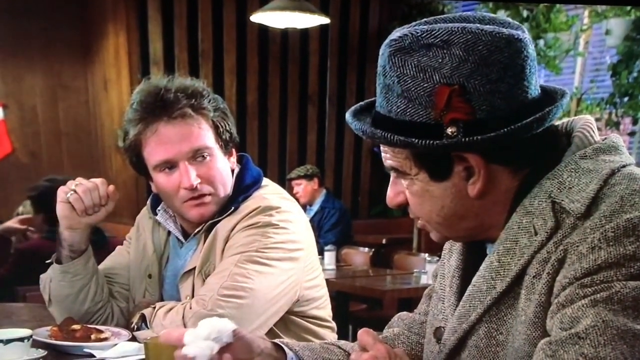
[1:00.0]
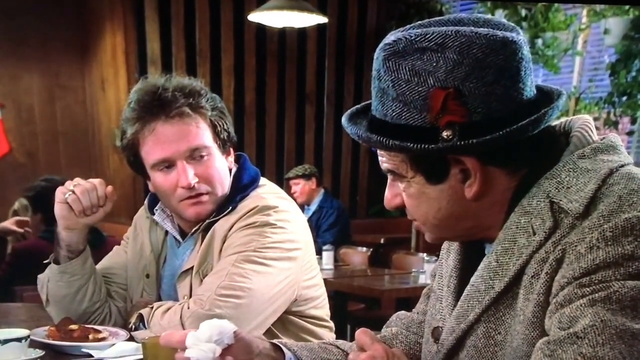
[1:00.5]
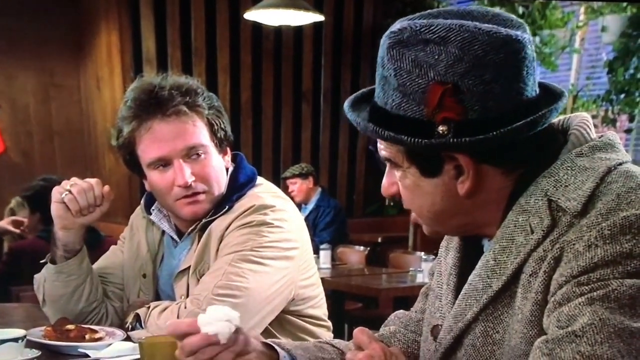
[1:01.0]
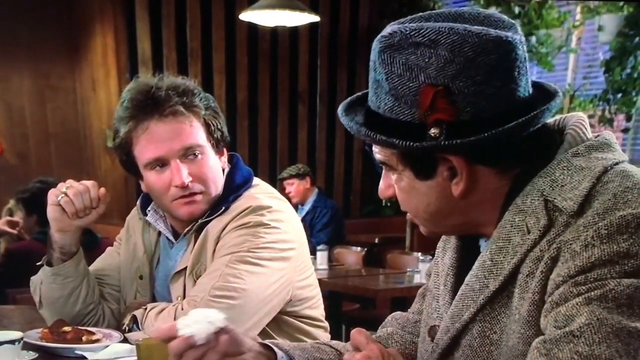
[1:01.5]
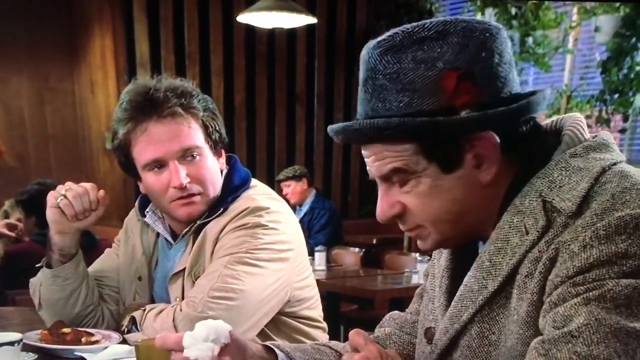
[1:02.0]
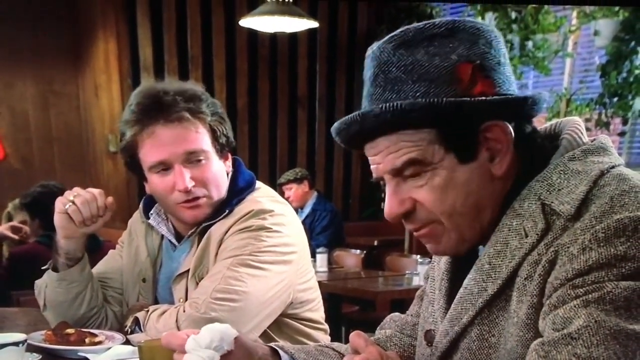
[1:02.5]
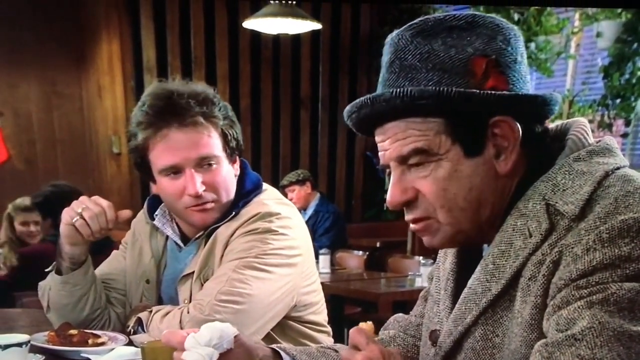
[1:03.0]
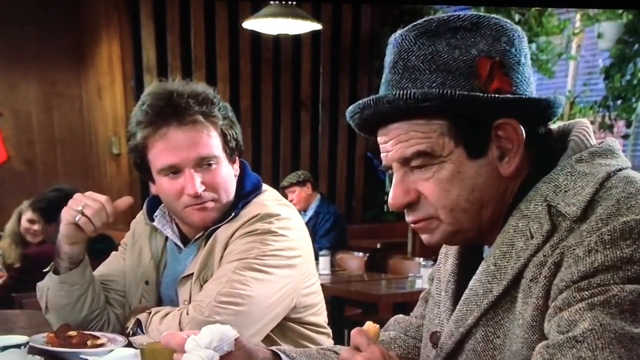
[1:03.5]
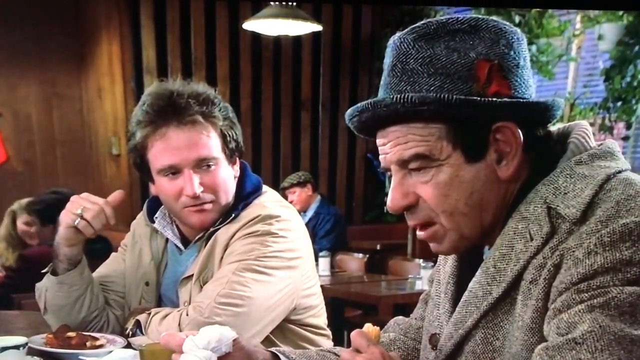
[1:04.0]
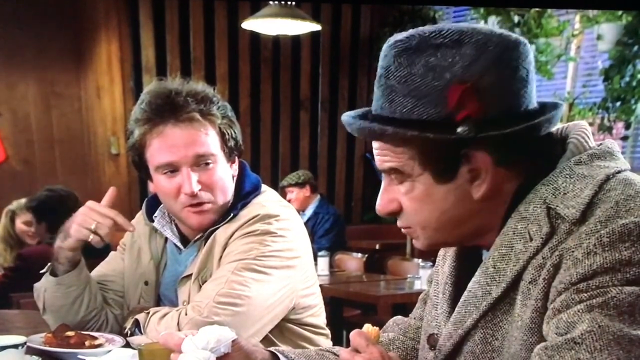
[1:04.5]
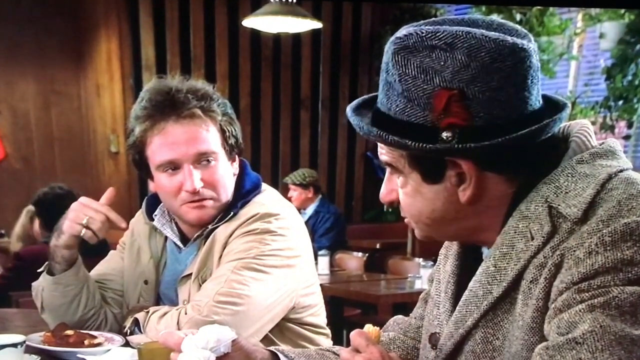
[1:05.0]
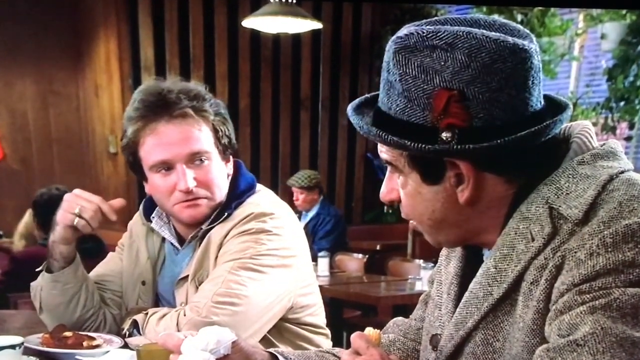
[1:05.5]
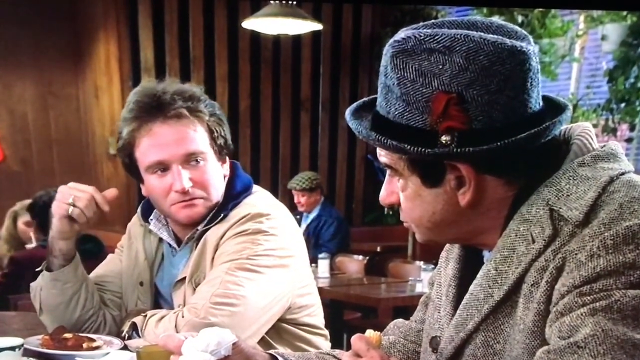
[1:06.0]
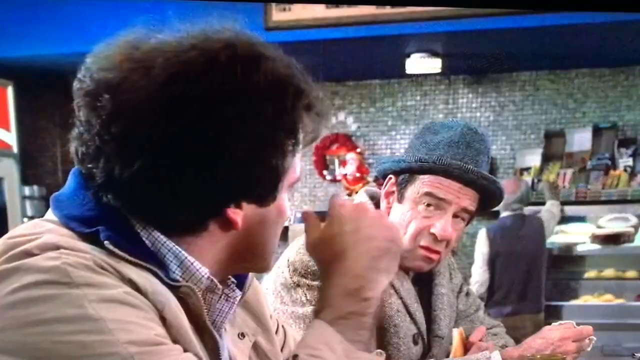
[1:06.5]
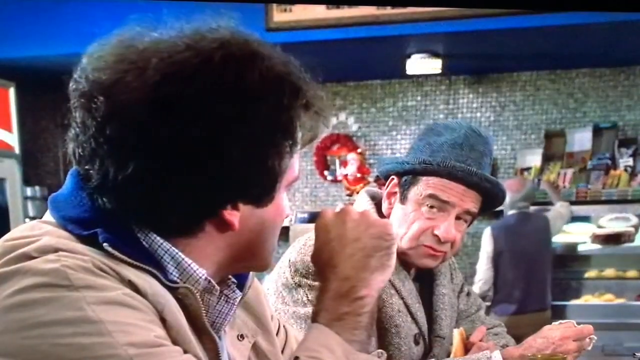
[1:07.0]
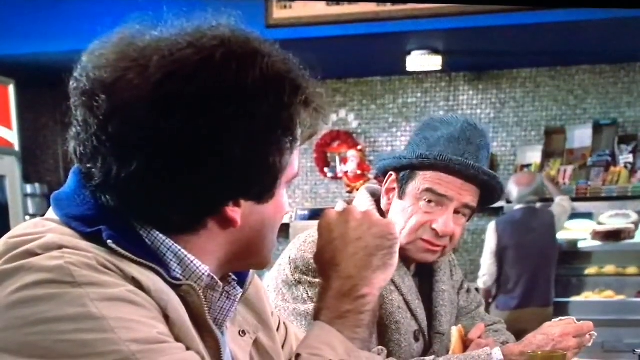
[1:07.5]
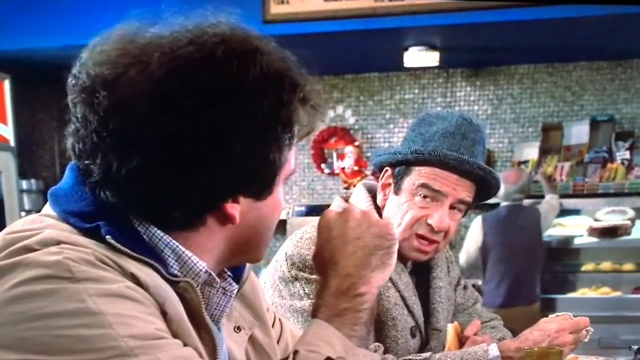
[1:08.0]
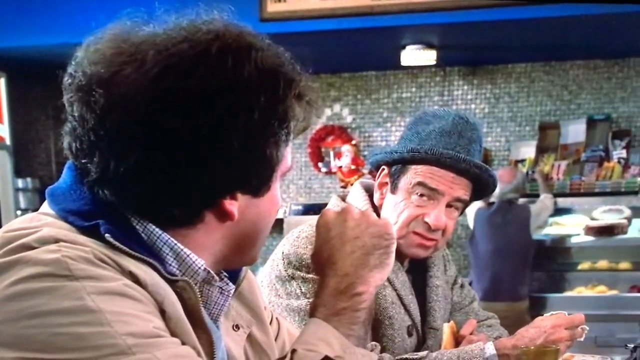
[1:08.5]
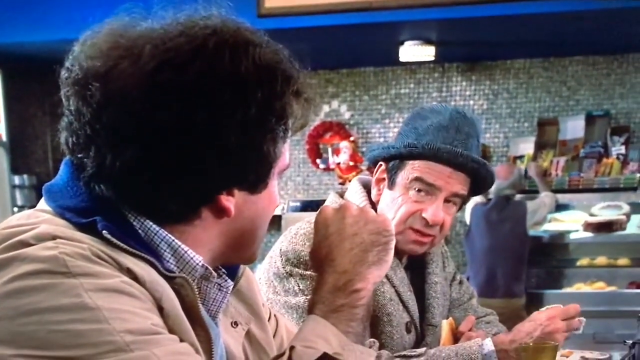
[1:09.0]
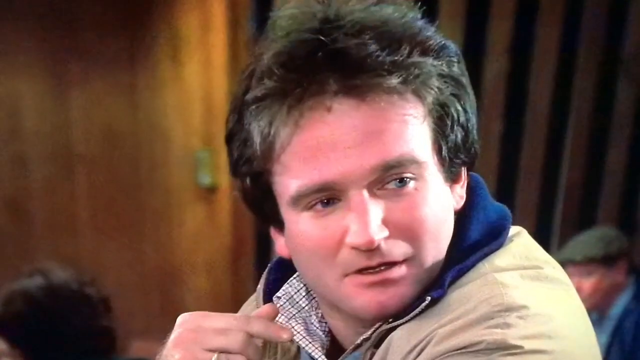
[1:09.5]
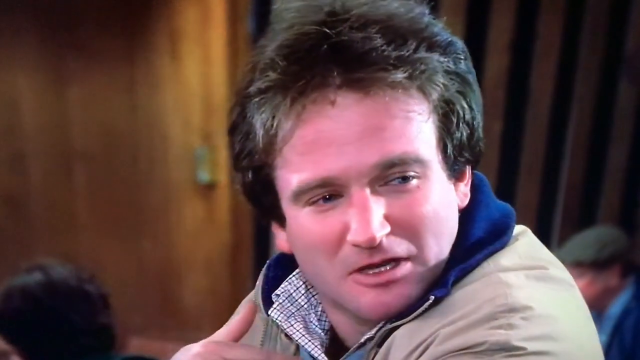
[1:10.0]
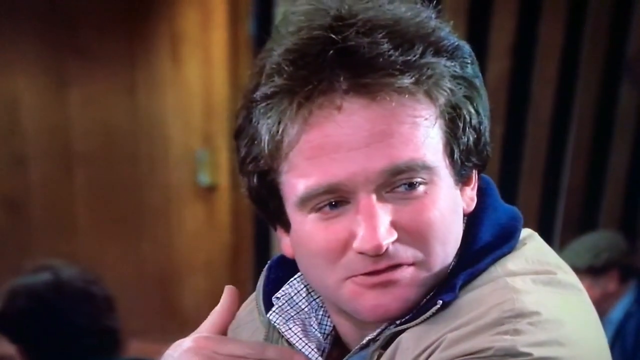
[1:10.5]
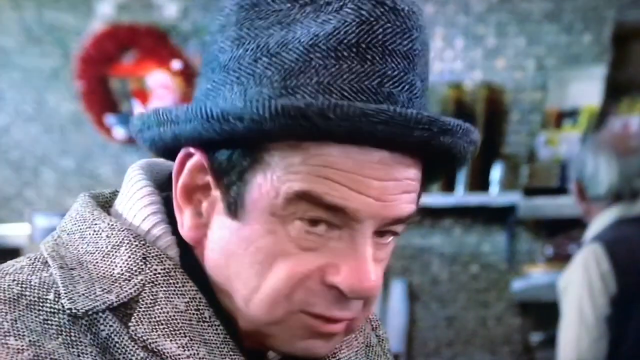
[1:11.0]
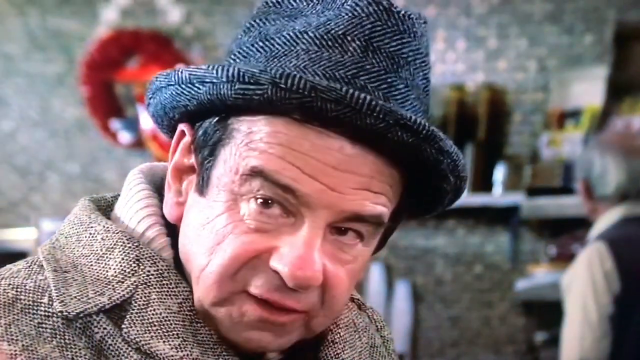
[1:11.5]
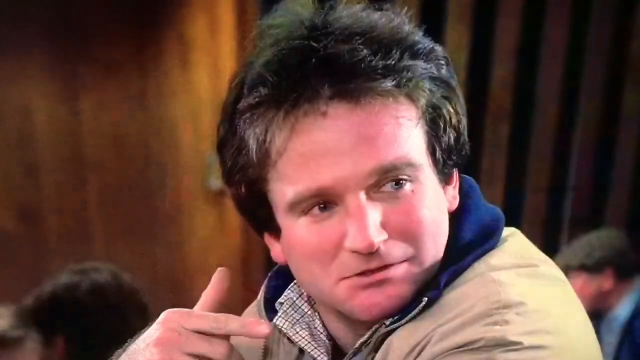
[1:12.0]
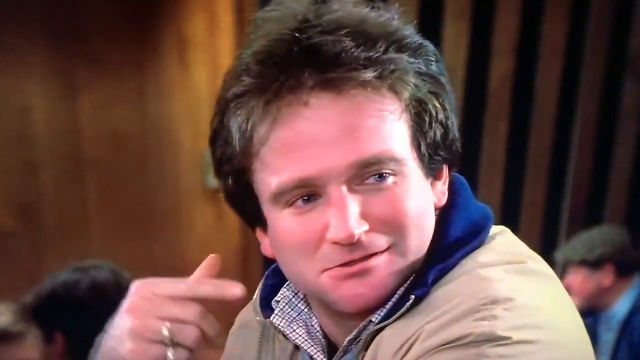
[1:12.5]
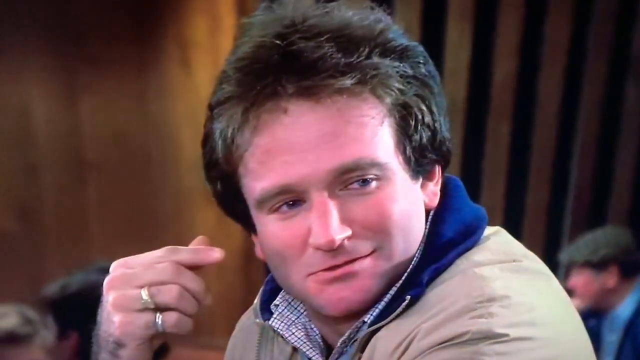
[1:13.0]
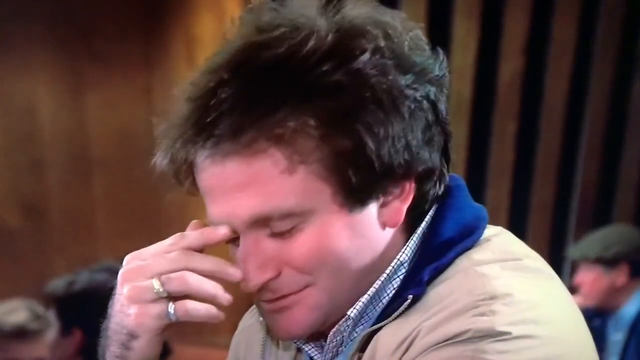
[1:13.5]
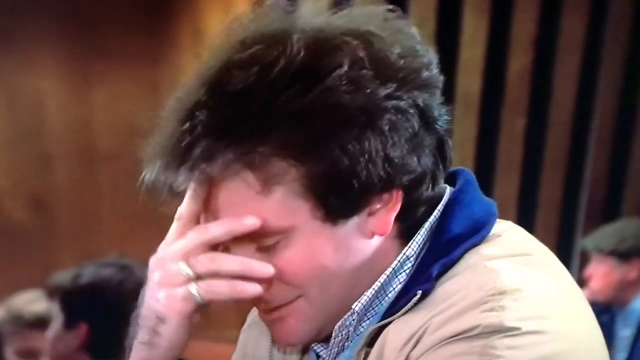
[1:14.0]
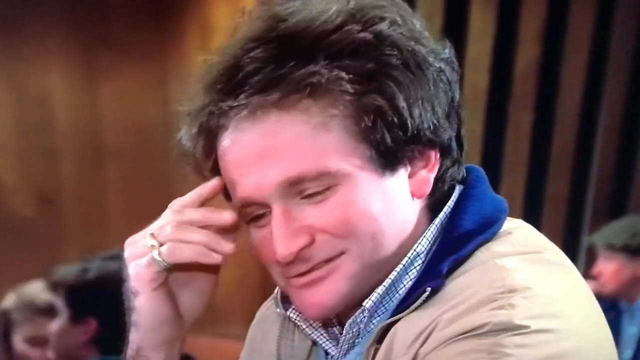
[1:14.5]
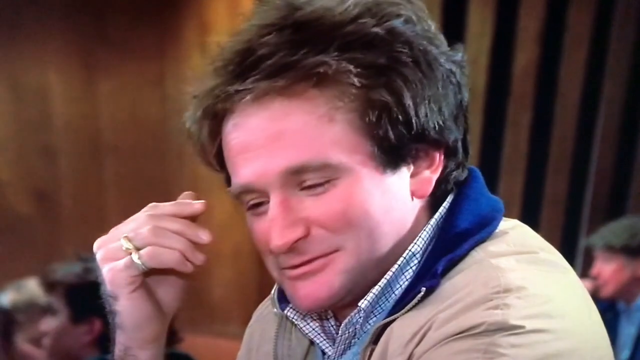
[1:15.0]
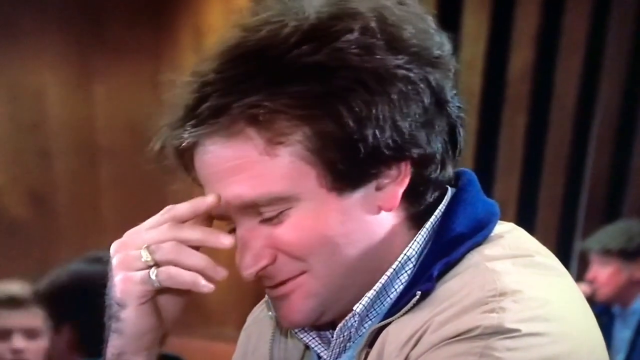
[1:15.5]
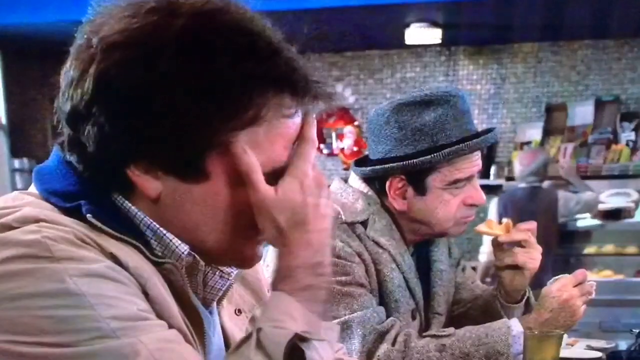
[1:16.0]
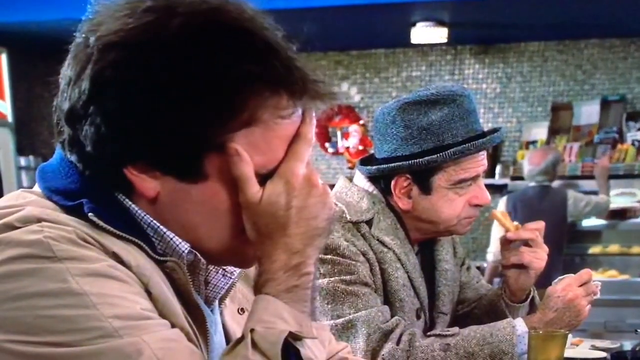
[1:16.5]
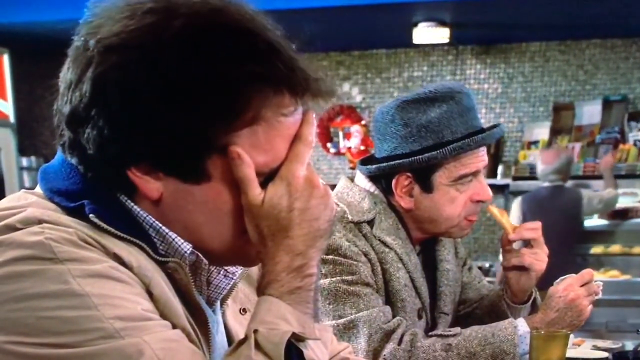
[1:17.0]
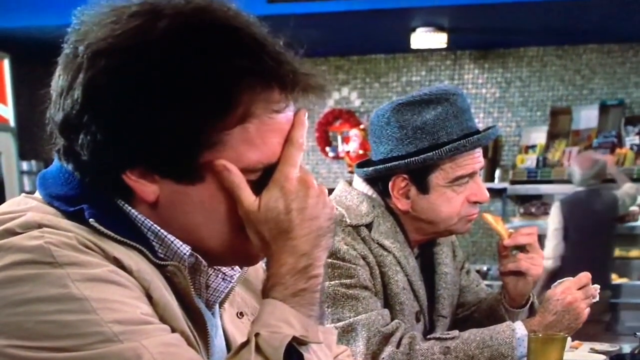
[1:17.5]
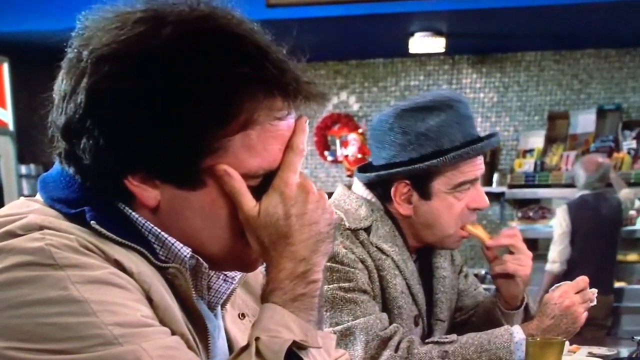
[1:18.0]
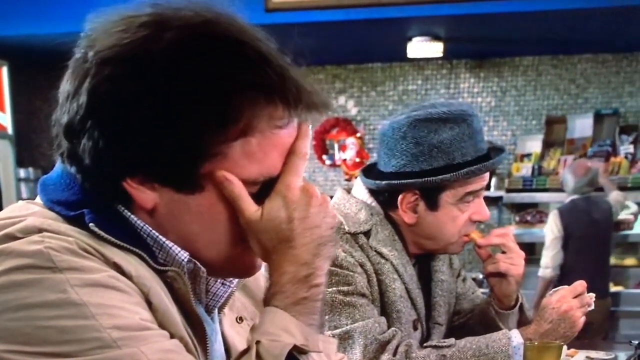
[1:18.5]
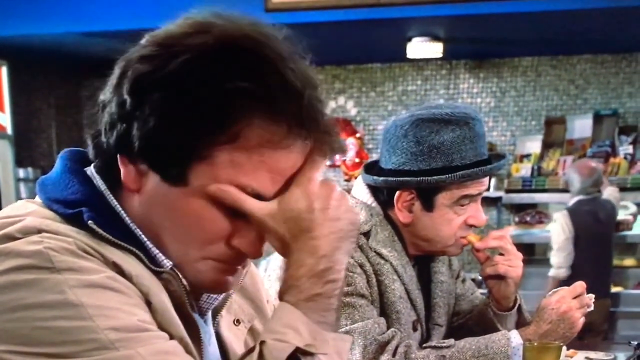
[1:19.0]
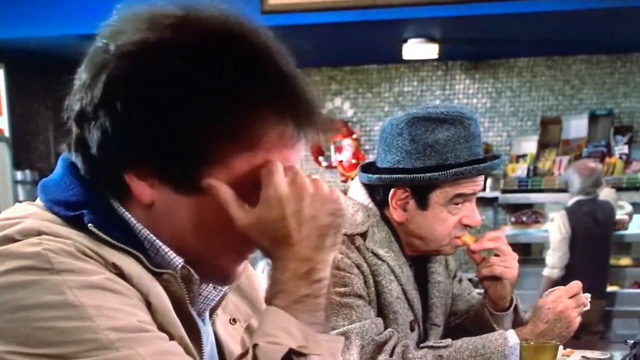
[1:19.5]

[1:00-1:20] The man with the hat speaks for a while. The man who was sulking says a few words, leaning slightly toward the man on his left, and points at himself with his finger. The man with the hat nods while chewing his food and says a few more words. The two exchange words back and forth, and the shots cut between the man with the hat and the sulking man a few times. The camera then returns to the sulking man, who puts his hand back on his forehead and leans against it while looking toward the counter in front of him. The man with the hat is still eating his food with his hands and watches the other man out of the corner of his eye. The scene seems to be an exchange between the two after their earlier silence.